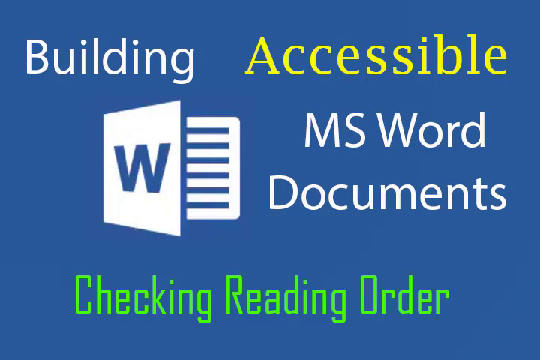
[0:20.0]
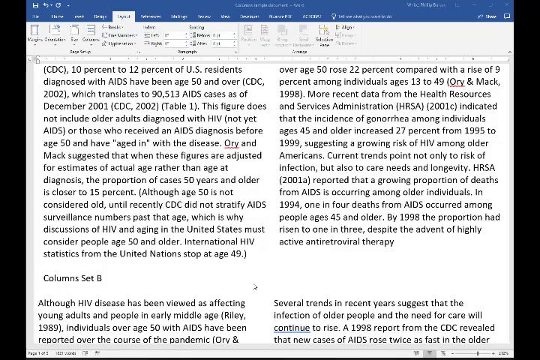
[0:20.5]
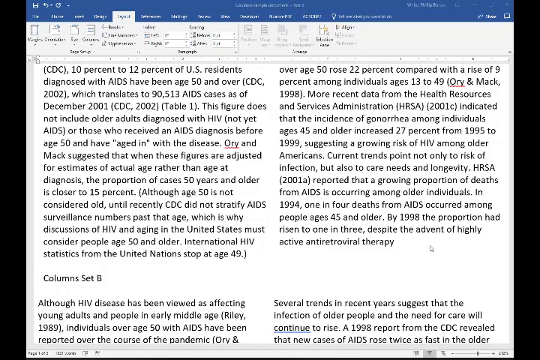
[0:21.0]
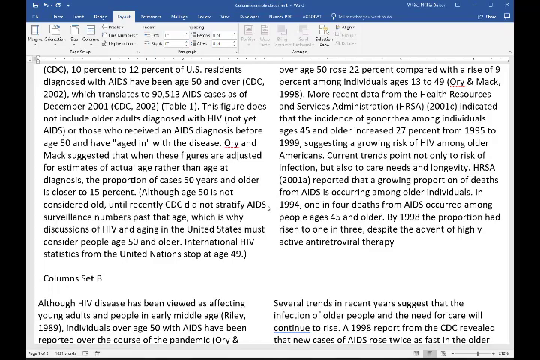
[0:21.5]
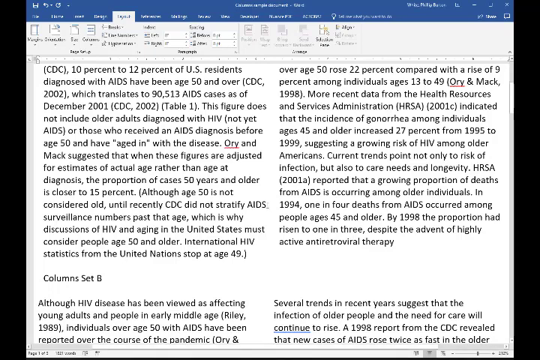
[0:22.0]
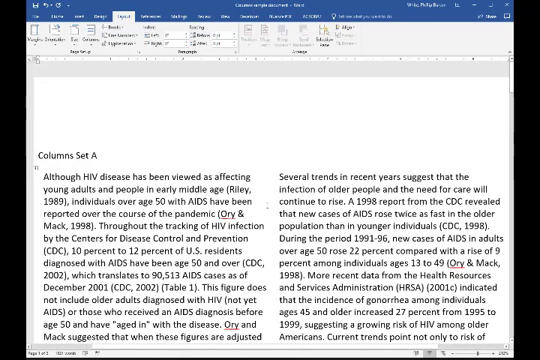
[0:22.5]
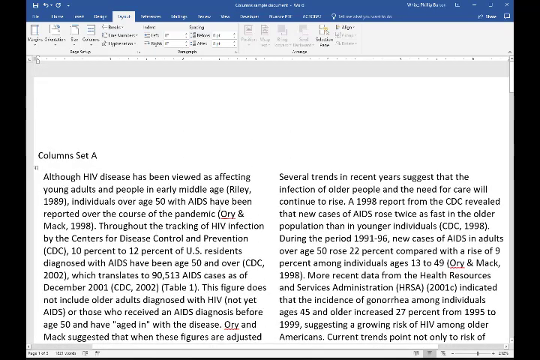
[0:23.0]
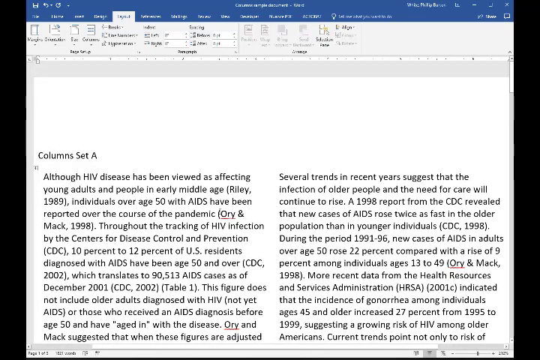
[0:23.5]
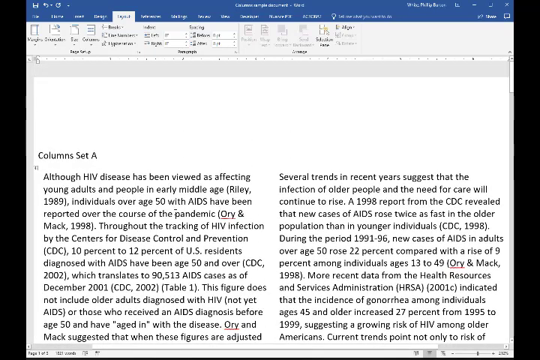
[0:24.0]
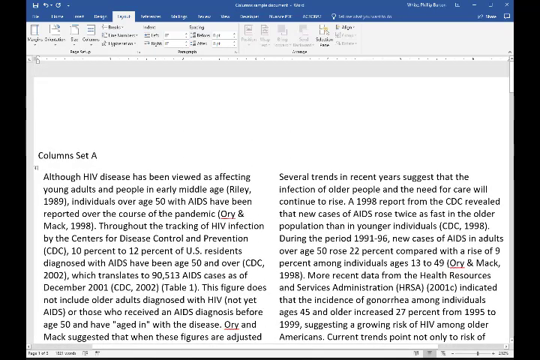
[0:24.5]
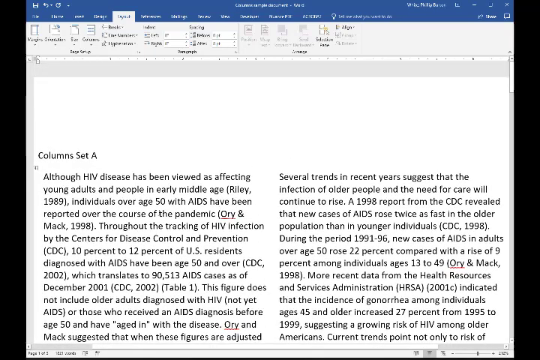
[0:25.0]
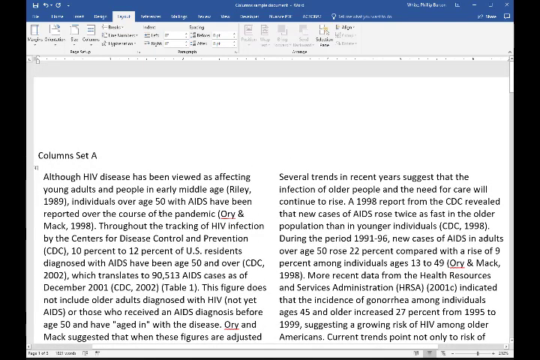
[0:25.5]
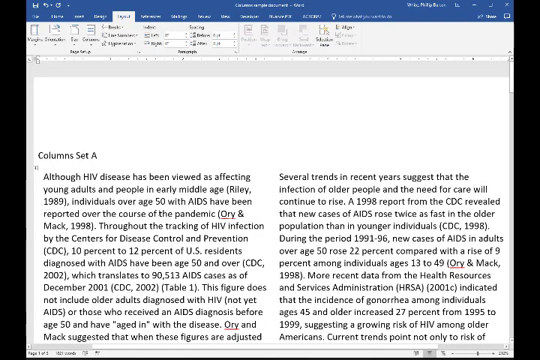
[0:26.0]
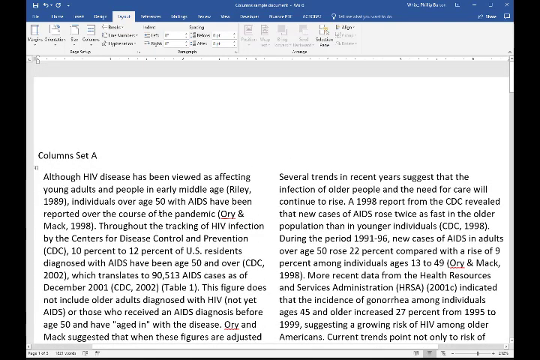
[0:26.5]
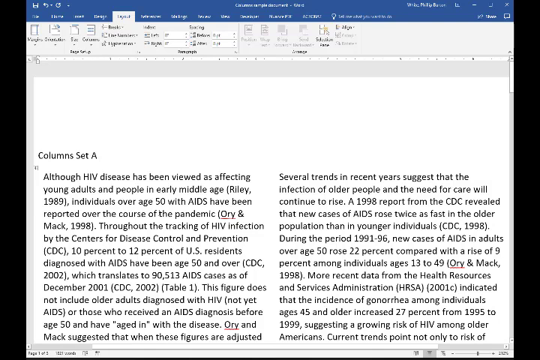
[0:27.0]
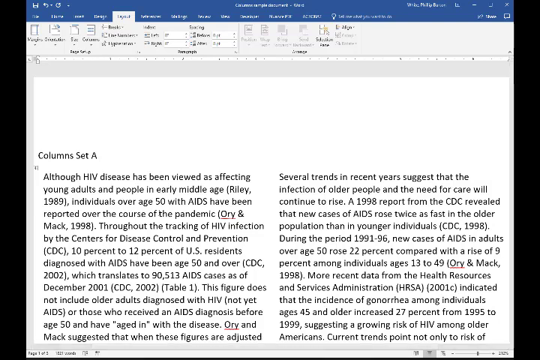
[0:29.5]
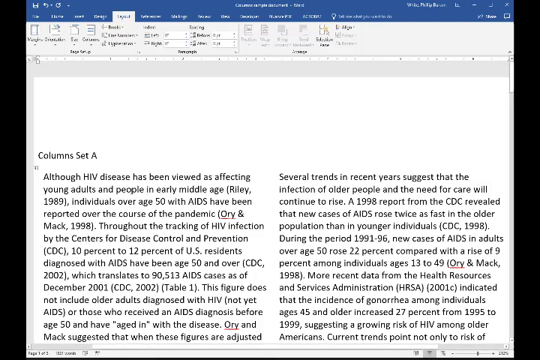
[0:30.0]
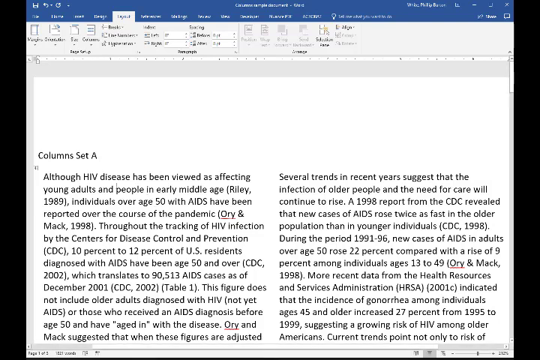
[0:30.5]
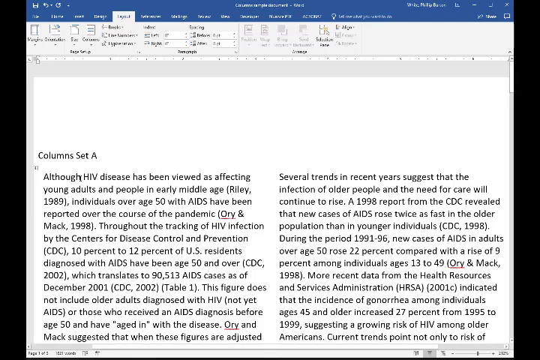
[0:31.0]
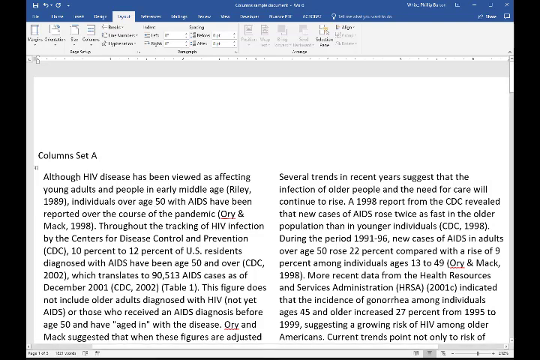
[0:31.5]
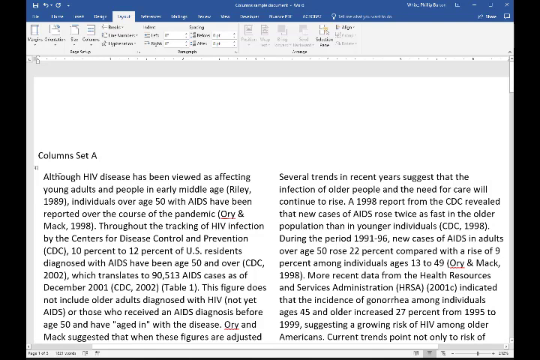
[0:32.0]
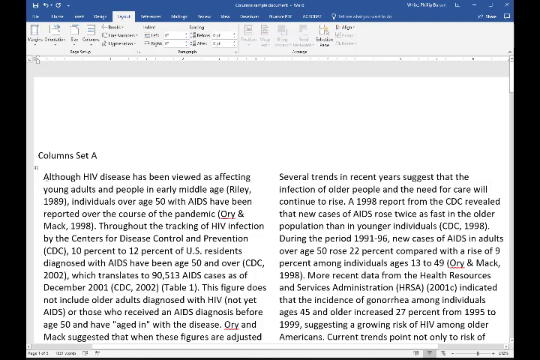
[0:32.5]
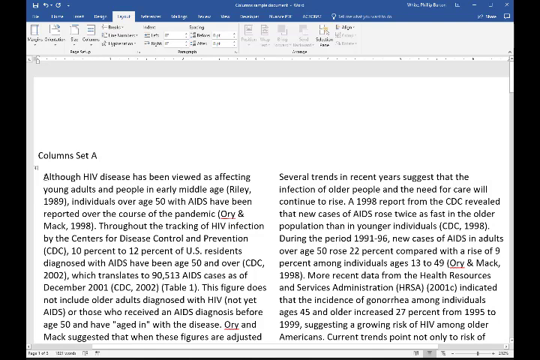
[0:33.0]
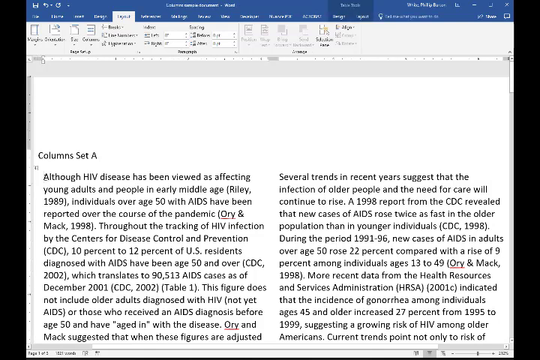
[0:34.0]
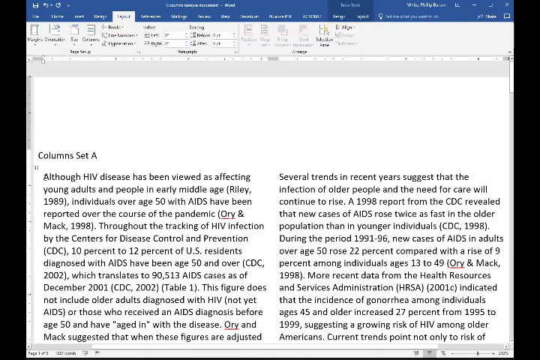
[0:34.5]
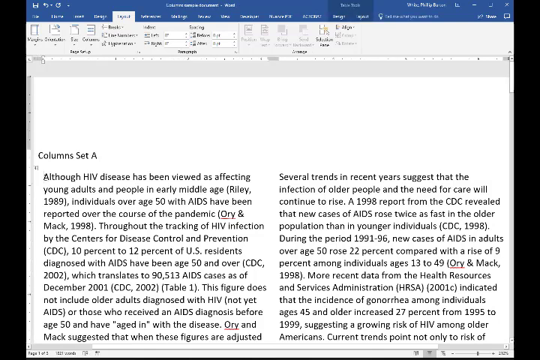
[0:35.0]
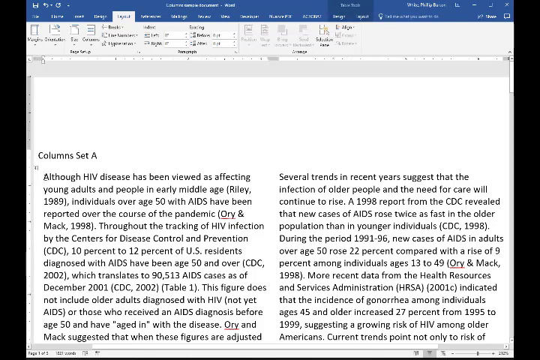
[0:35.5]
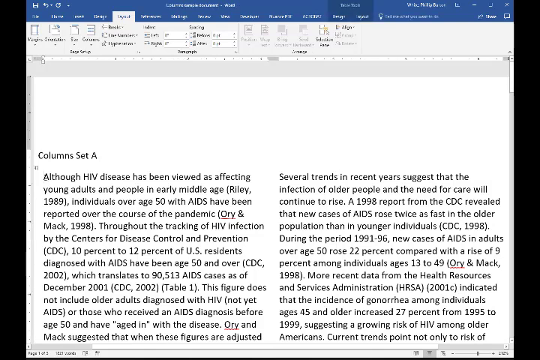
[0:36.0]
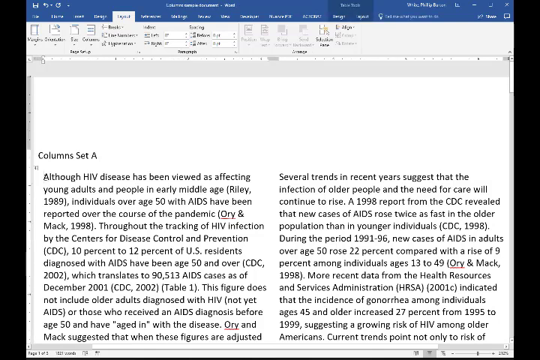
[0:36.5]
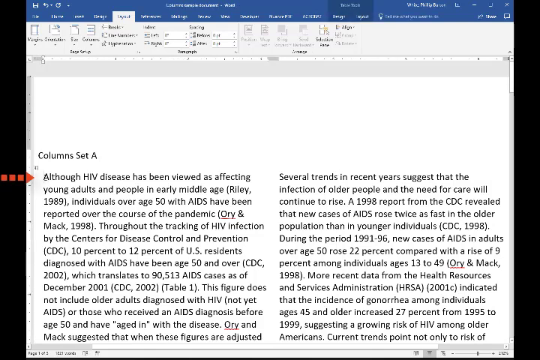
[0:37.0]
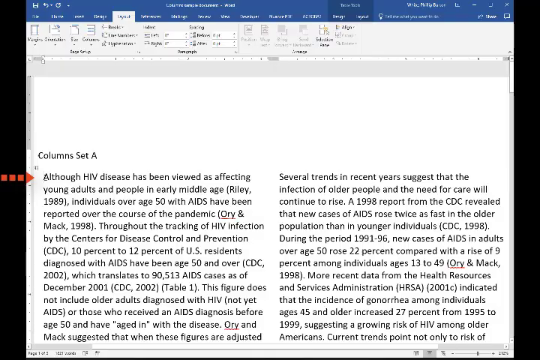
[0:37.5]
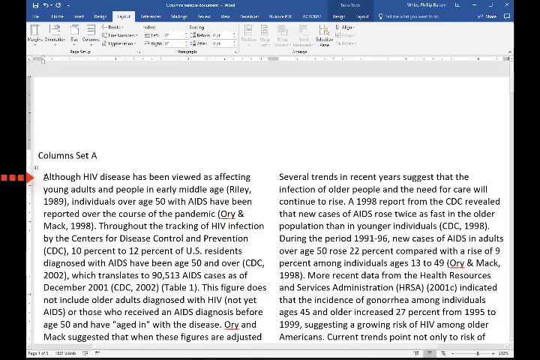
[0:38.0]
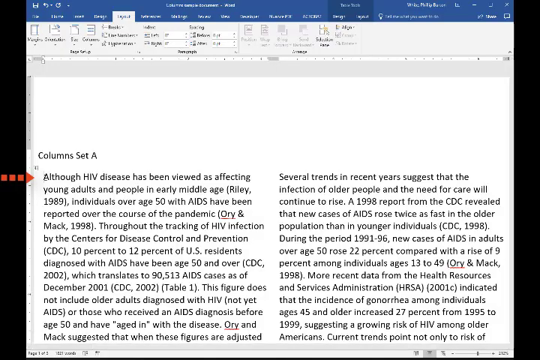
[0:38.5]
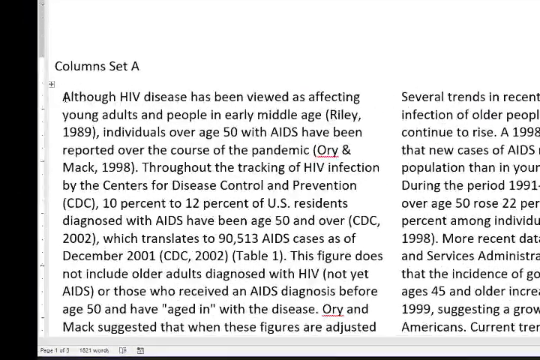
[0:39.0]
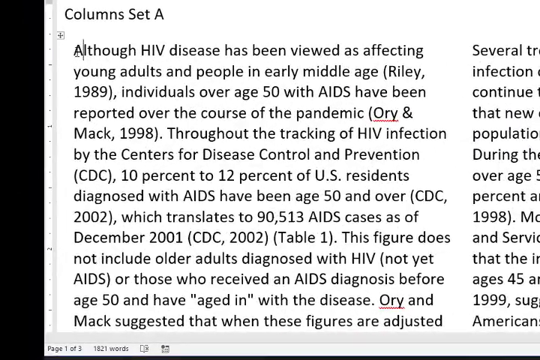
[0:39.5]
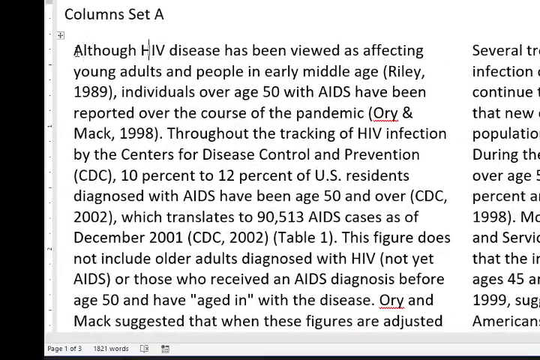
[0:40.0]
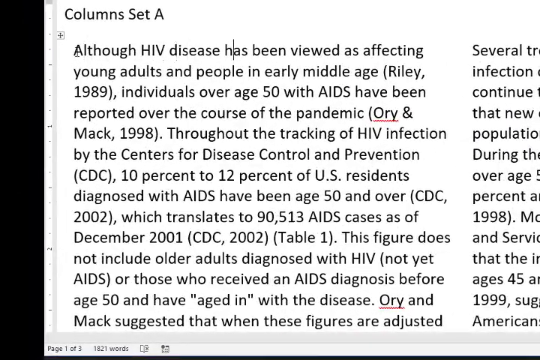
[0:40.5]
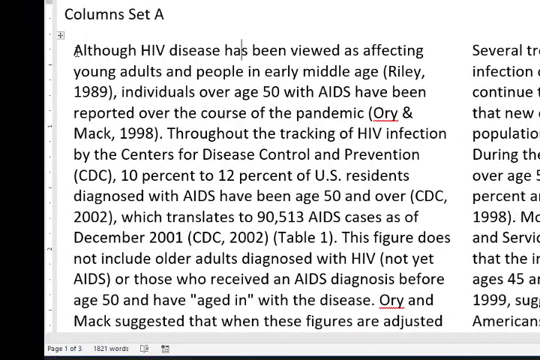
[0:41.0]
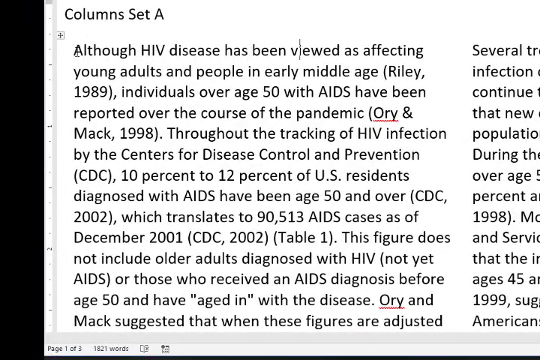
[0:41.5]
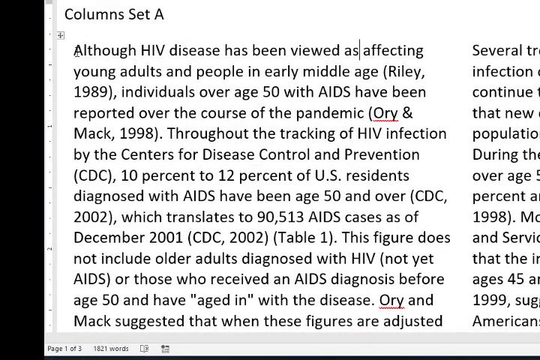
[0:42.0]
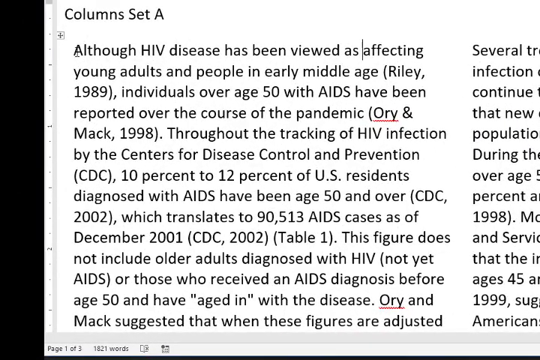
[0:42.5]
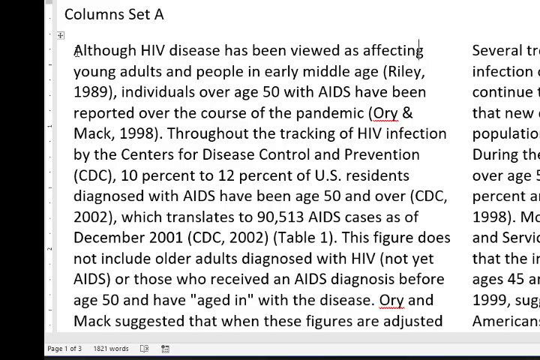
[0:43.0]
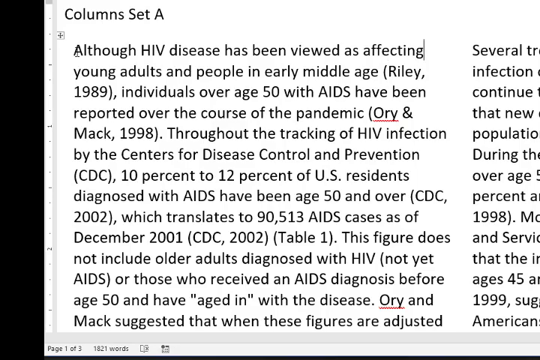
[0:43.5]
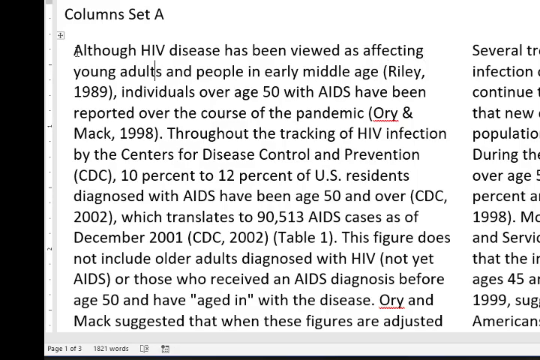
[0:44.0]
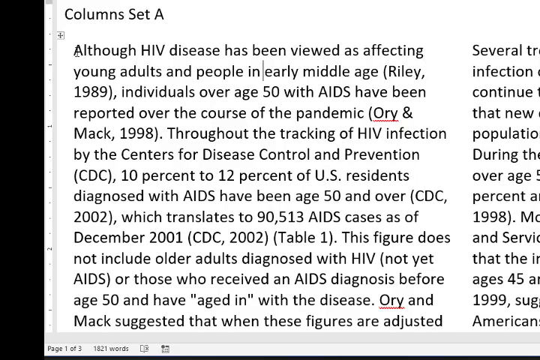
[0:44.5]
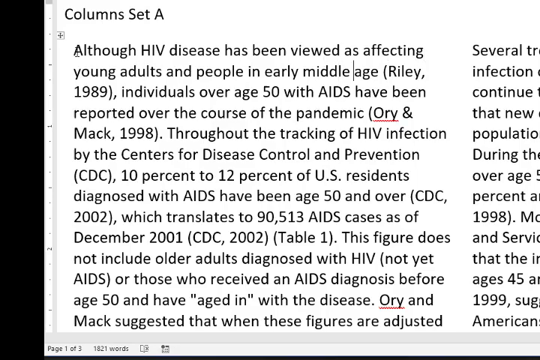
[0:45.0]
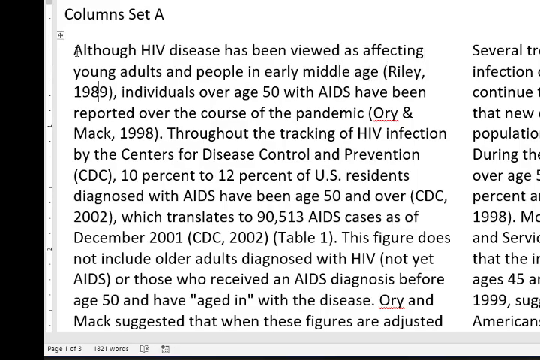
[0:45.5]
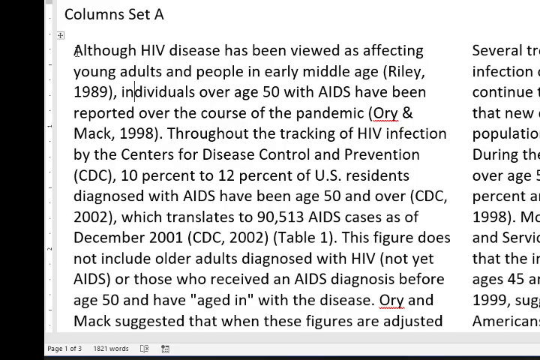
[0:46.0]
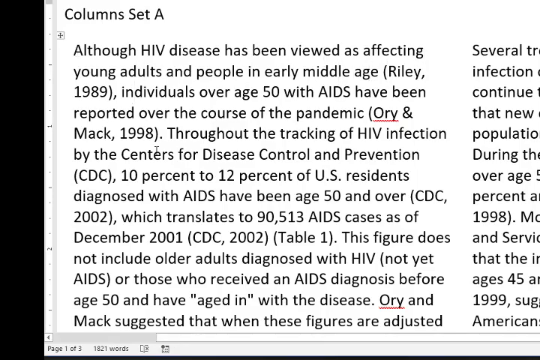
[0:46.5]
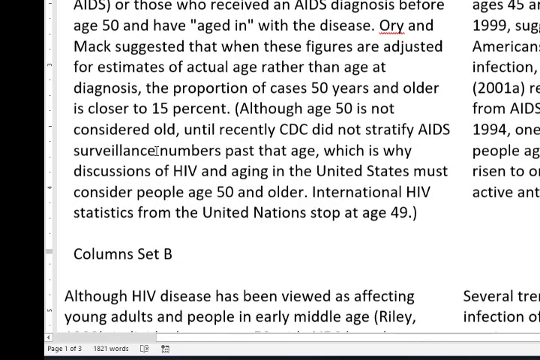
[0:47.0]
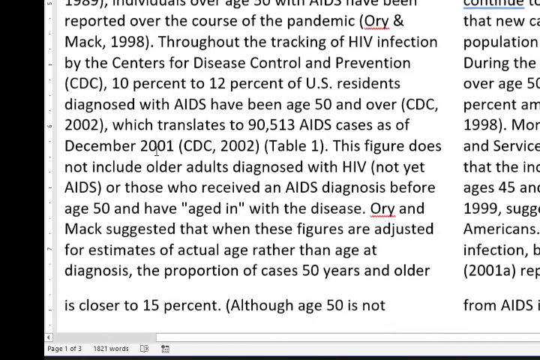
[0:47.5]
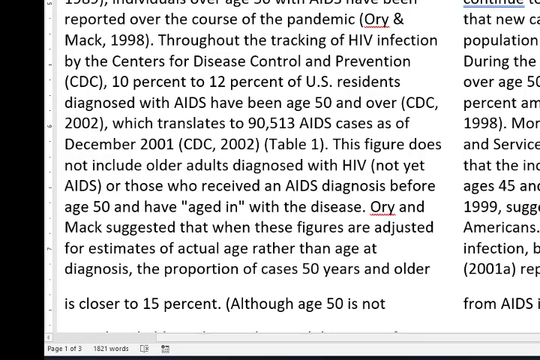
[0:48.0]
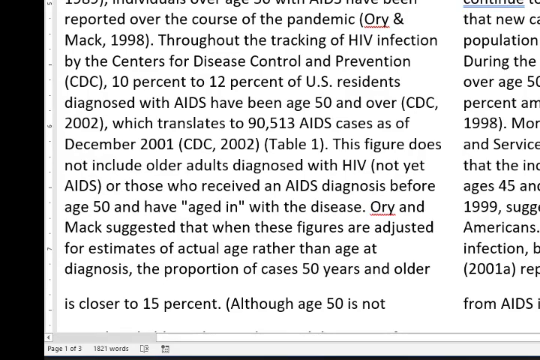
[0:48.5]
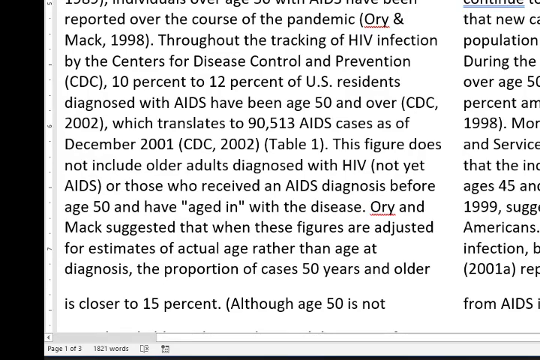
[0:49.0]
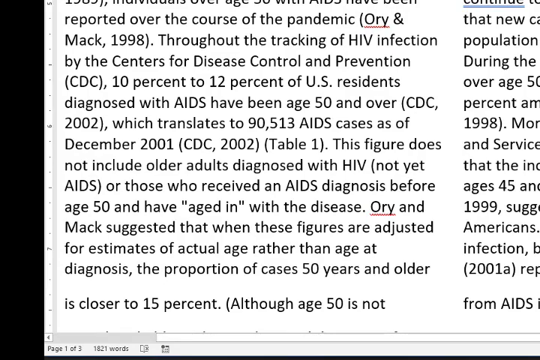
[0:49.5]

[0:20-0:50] A blue field with a gradient darkening the bottom maybe 20% of the screen gives the illusion of depth. At the top, like a header, is the word "building" in white and "accessible" in yellow. Below is a large clipart-style Microsoft Word icon that looks like a book with a white cover, a blue W and blue text, opening toward the viewer. Inside it says "MS Word documents" in white, and beneath that, in green, in a different, blockier, more primitive-looking font, it says "checking reading order". The screen immediately transitions to an MS Word screen, like a screen capture or screen share, with a blue header on top and a toolbar that is blurry at the video's resolution. Beneath is a white screen with a two-column document about HIV, like an academic paper. The page scrolls up while the header stays the same, showing the top of the document, where it says "column A" and a lot of information about HIV. The screen stays on this for a considerable time. Then it zooms in on the section shown as column A, and the cursor begins to move across a line that begins "although HIV disease has been". The cursor moves from the word "although" to the right along the line in an irregular fashion and continues down. The mouse then appears on screen and scrolls down, showing a little more of column A.